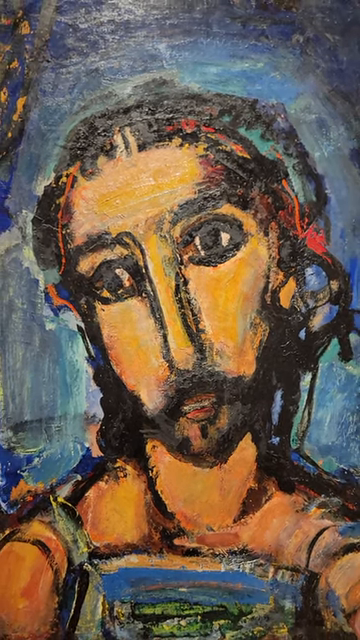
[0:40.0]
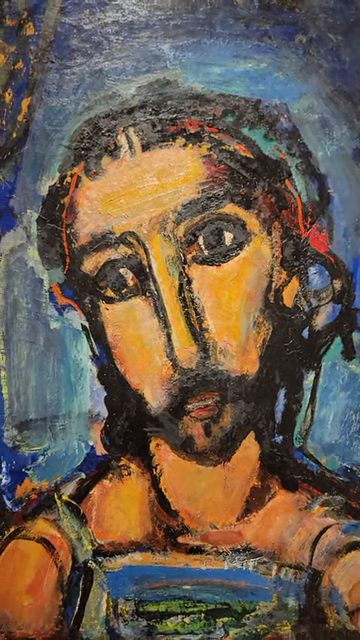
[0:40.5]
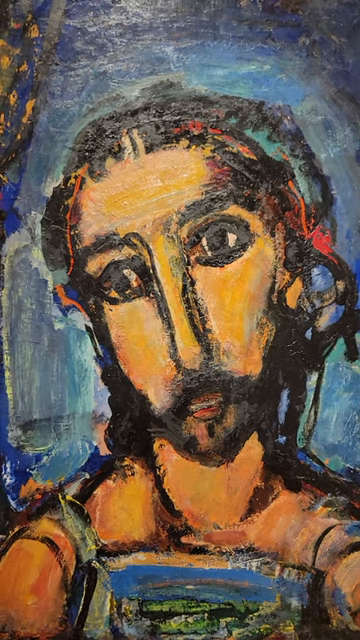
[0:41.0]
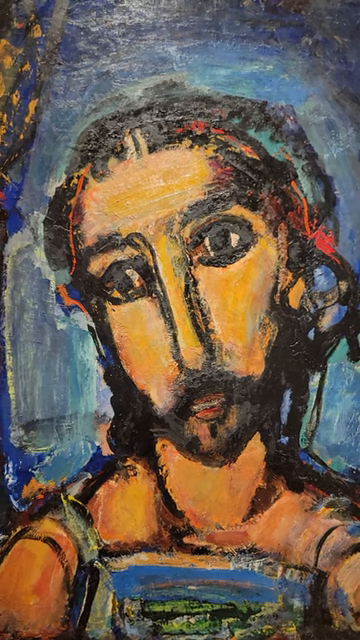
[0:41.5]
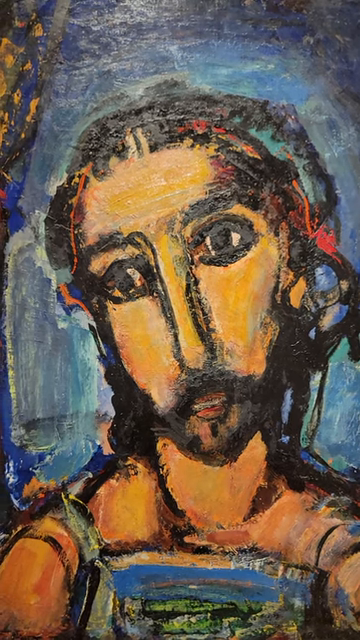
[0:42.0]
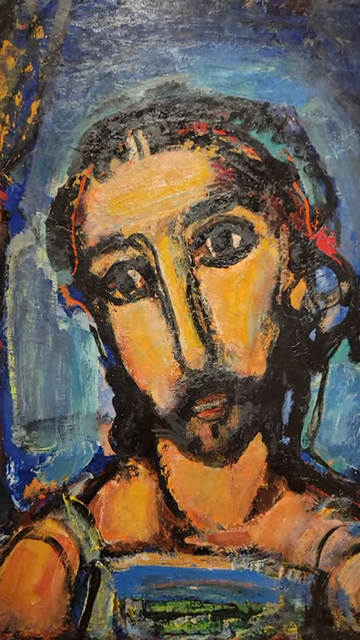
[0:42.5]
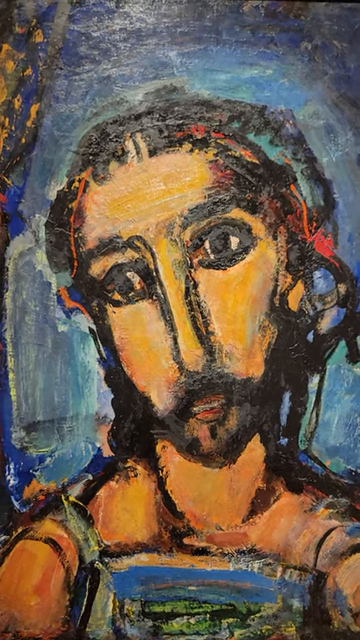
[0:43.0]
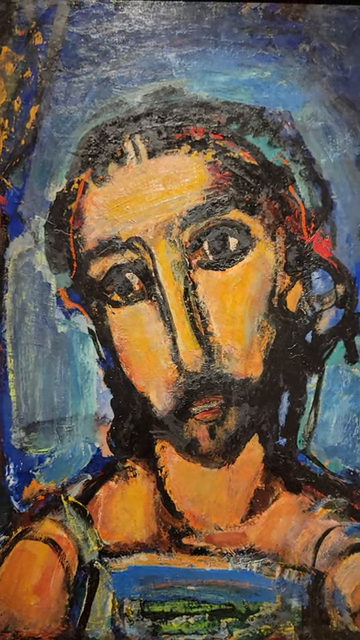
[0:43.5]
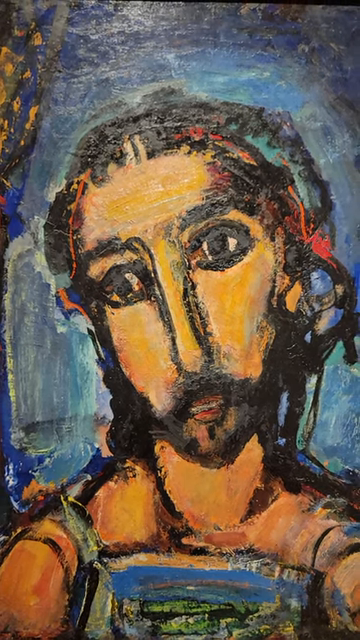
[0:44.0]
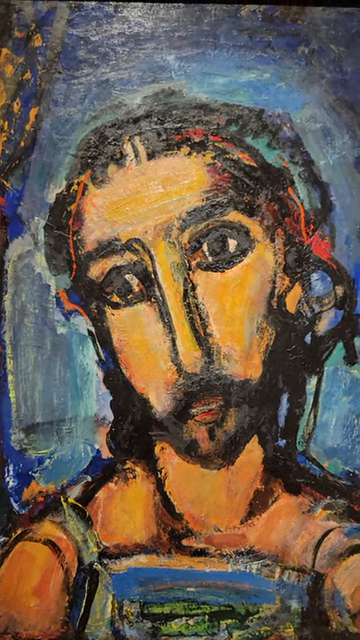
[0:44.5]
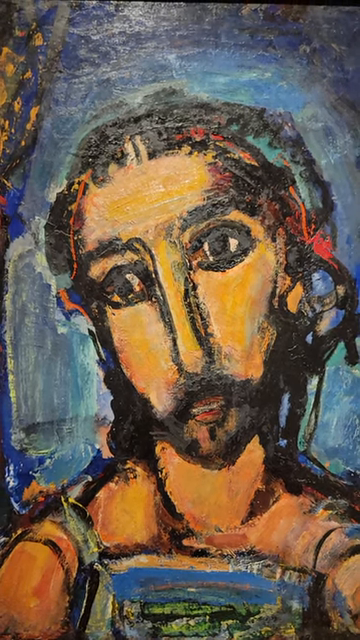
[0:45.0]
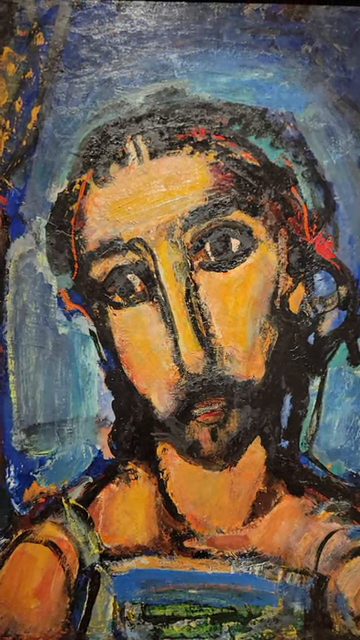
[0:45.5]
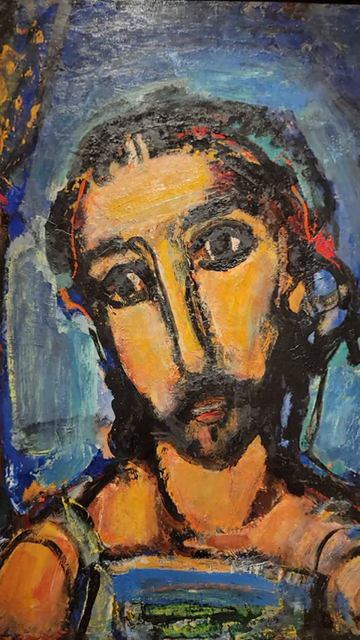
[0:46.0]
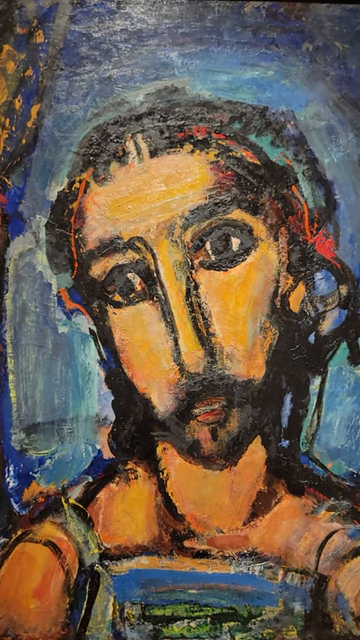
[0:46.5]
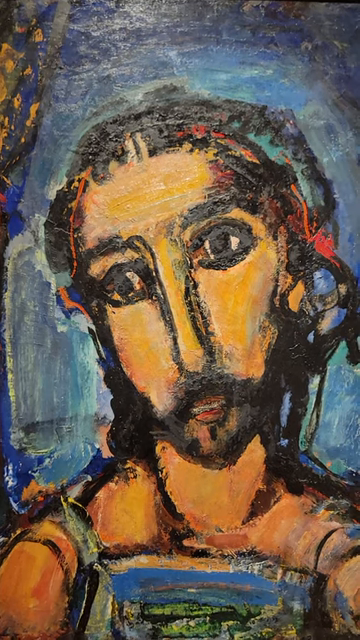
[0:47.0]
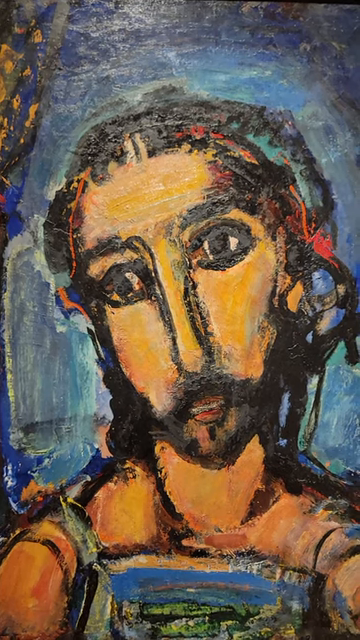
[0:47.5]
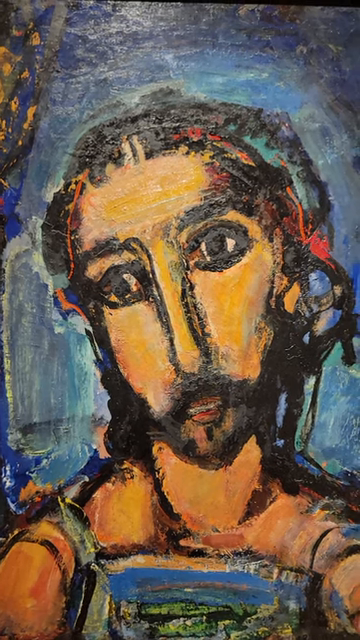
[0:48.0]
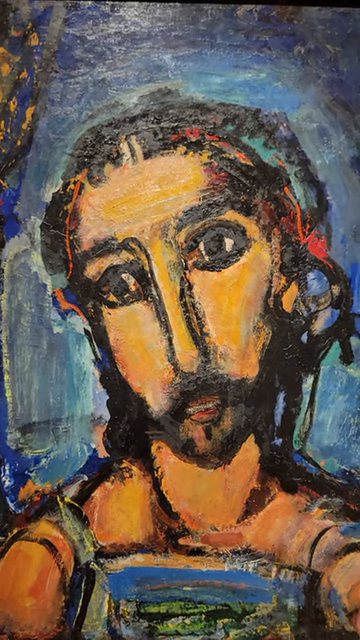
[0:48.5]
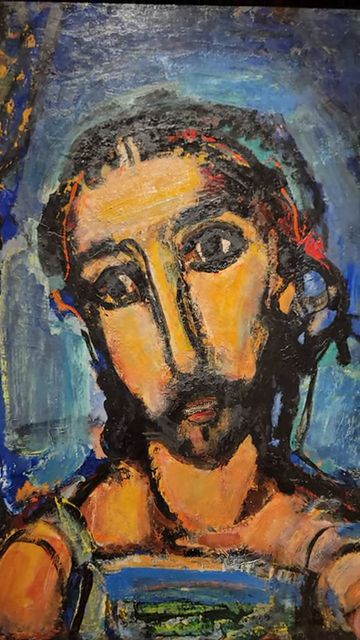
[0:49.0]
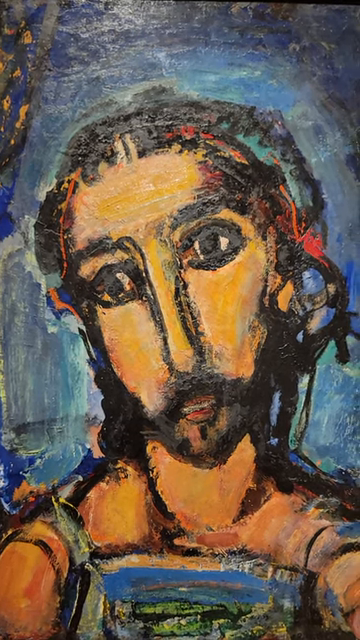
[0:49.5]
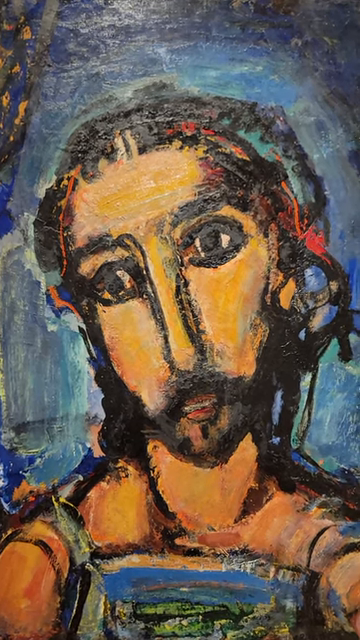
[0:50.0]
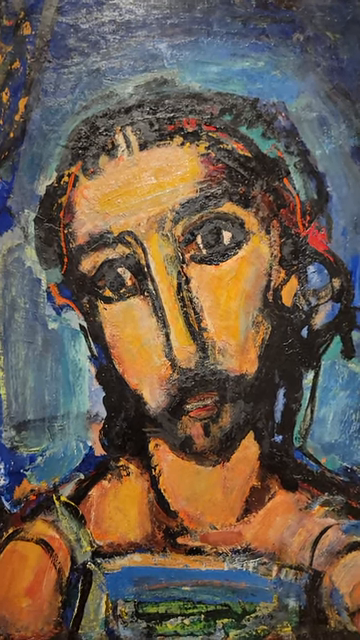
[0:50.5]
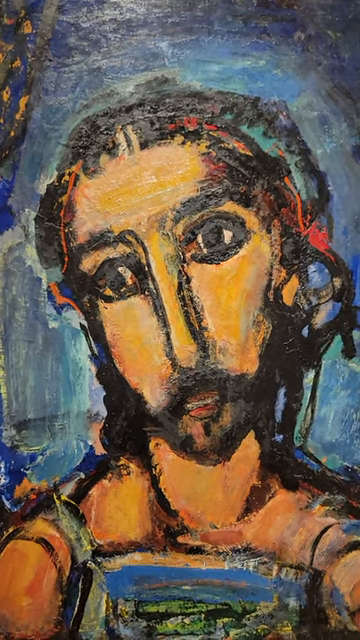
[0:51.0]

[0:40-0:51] A close-up shows a painting of a more modern-day Jesus. Faint white light moves from left to right over the painting, which could come from the camera being used. The paint is not very smooth and looks kind of rough, and the painting style is rough around the edges rather than sharp, with colors kind of blurred together. The modern-day Jesus looks to the right side of the picture. His head takes up the majority of the picture and is surrounded by dark blue and light blue colors. Some of the dark blue also appears at the bottom of the painting, with Jesus's shoulders and neck surrounding this blue area.